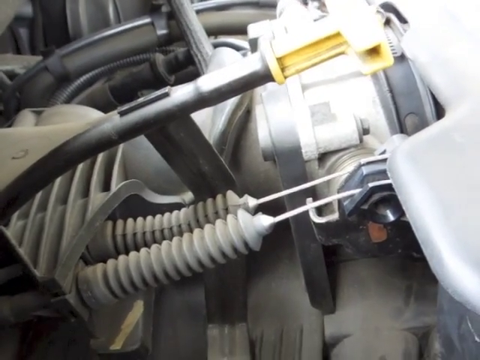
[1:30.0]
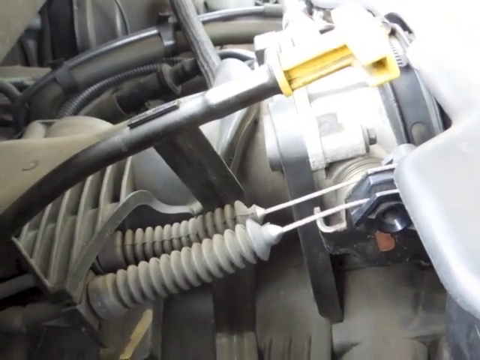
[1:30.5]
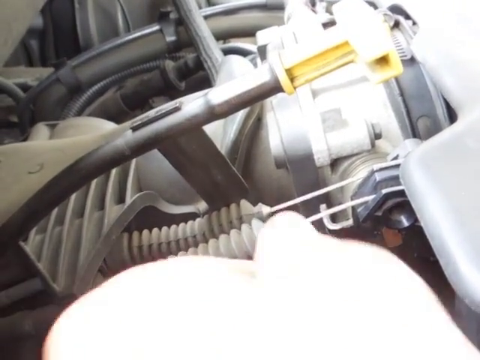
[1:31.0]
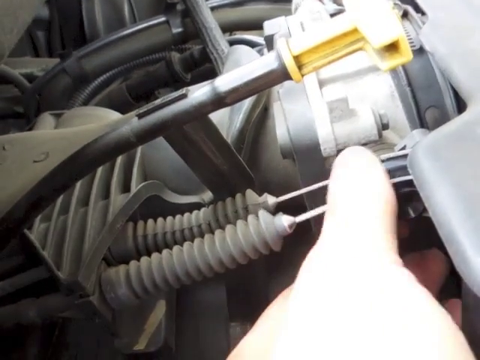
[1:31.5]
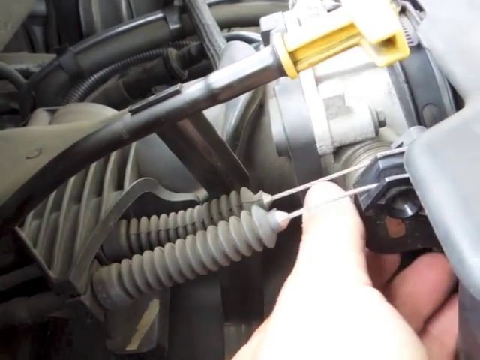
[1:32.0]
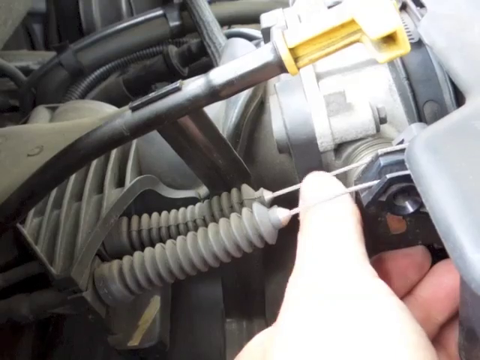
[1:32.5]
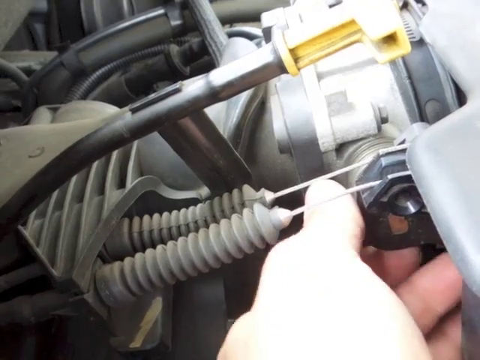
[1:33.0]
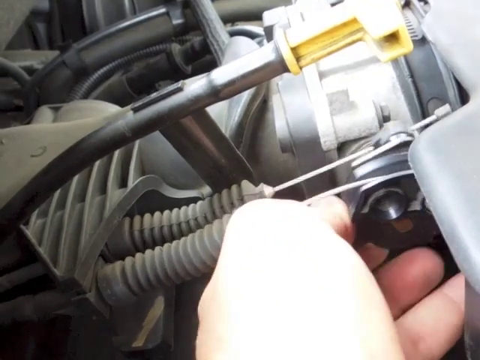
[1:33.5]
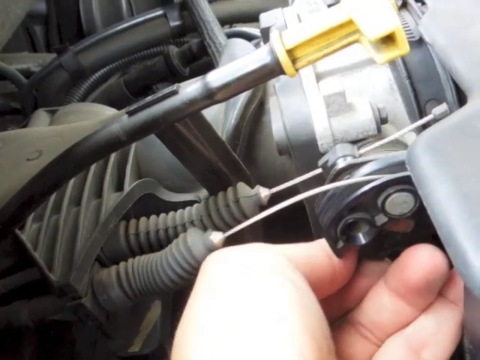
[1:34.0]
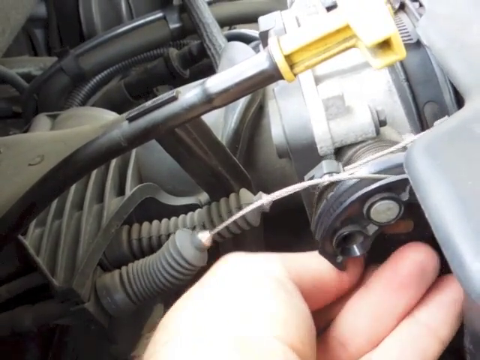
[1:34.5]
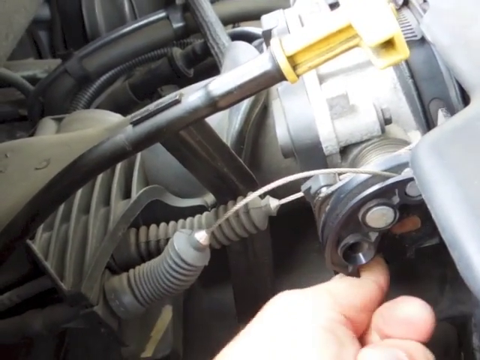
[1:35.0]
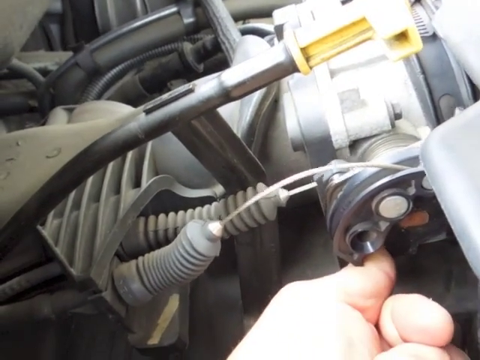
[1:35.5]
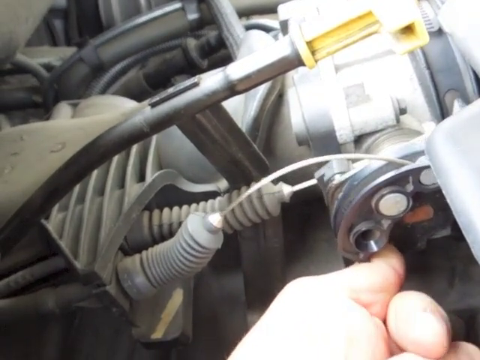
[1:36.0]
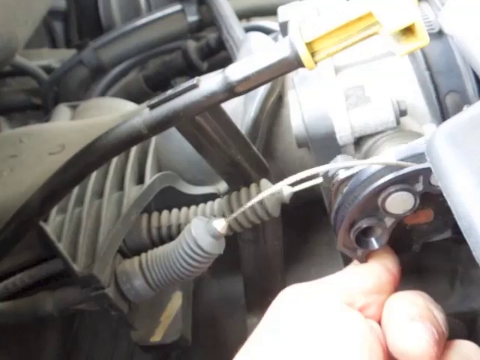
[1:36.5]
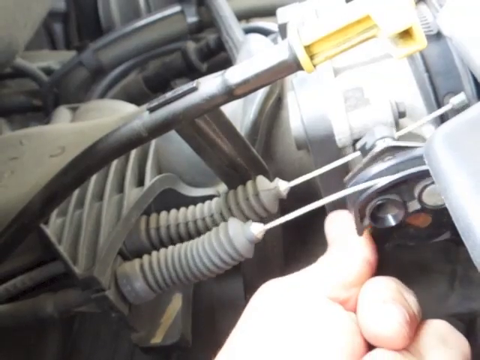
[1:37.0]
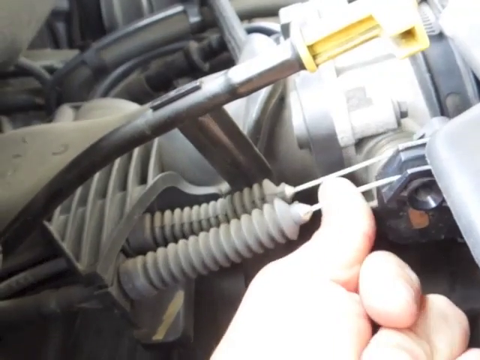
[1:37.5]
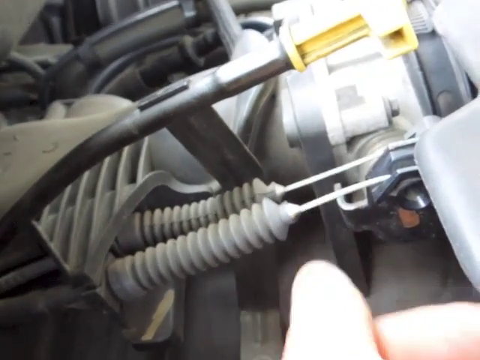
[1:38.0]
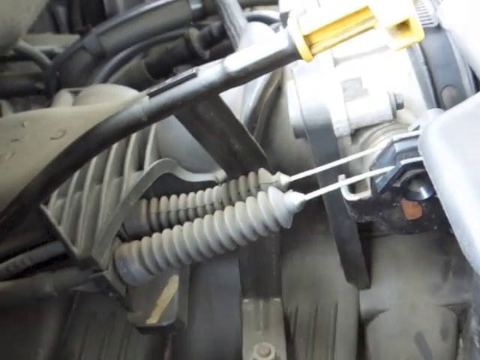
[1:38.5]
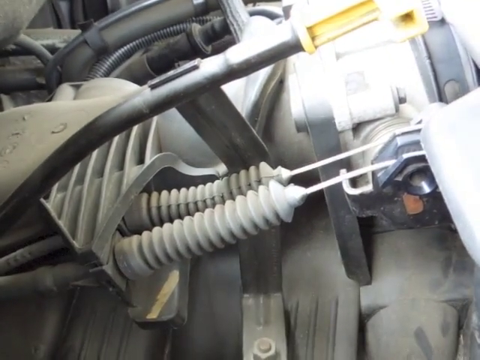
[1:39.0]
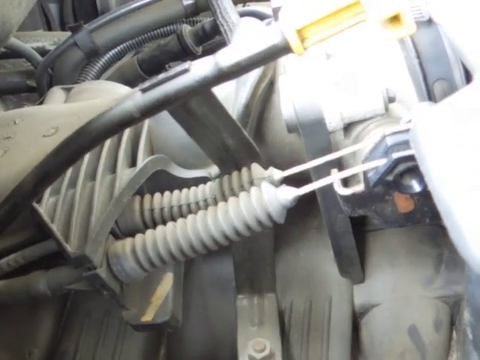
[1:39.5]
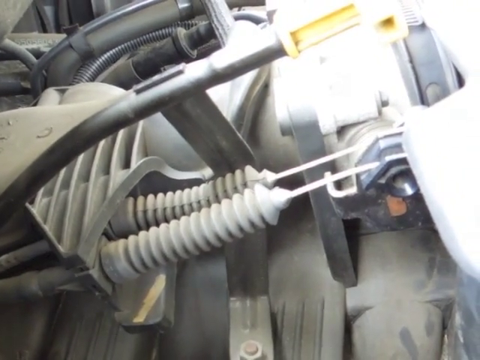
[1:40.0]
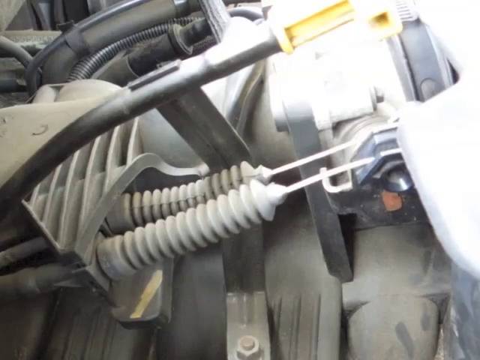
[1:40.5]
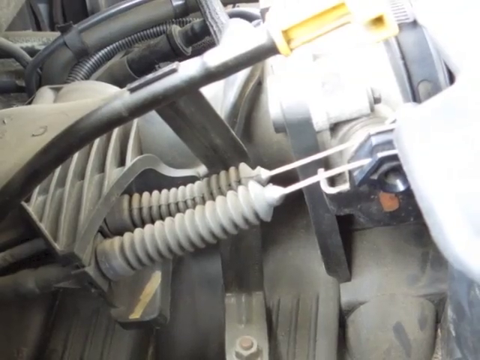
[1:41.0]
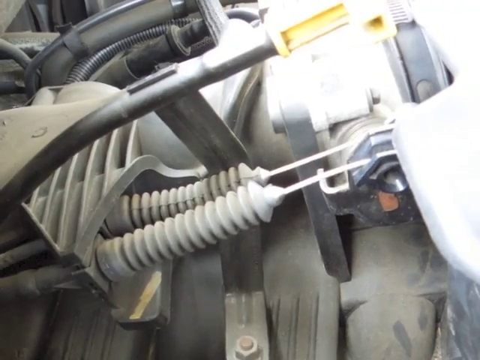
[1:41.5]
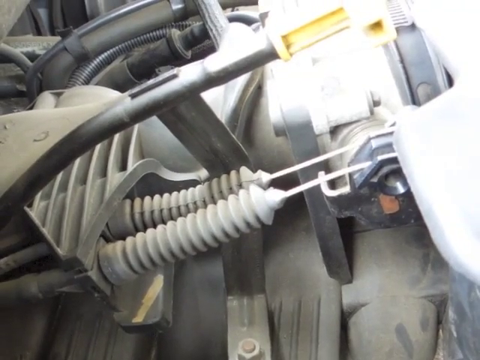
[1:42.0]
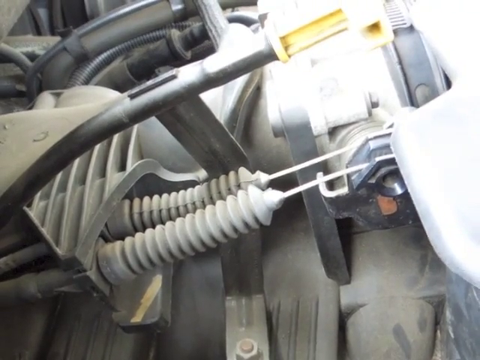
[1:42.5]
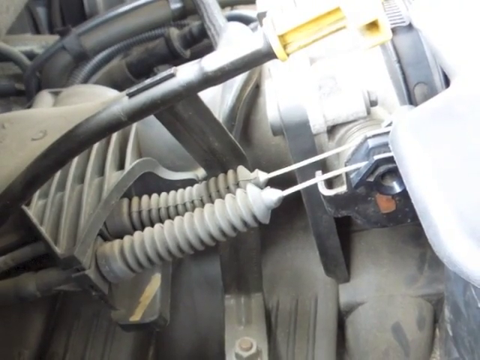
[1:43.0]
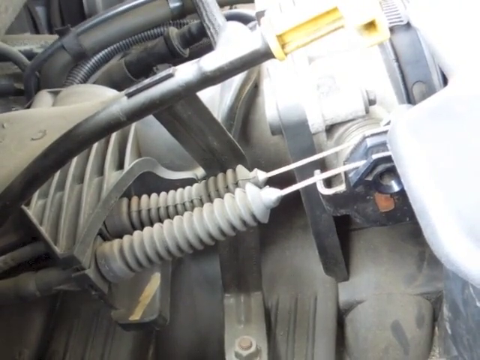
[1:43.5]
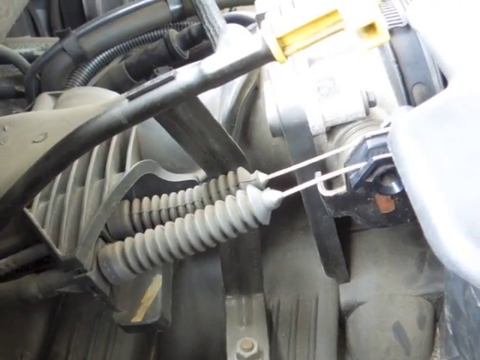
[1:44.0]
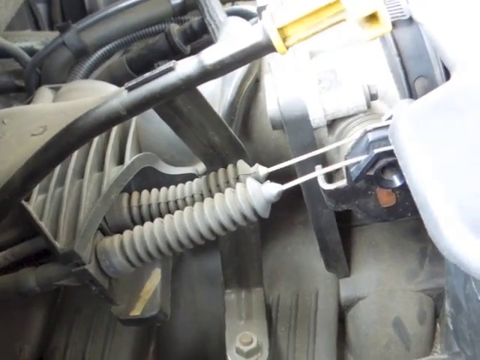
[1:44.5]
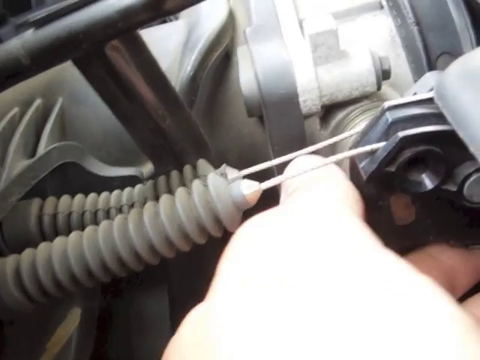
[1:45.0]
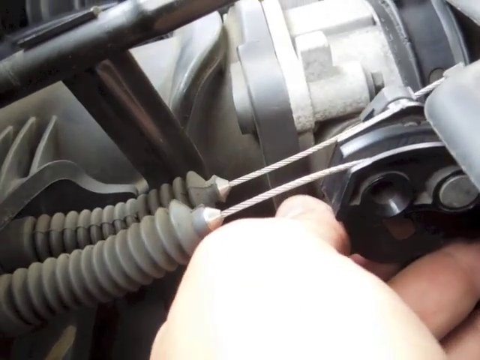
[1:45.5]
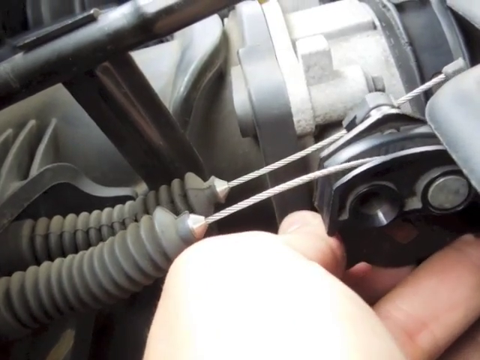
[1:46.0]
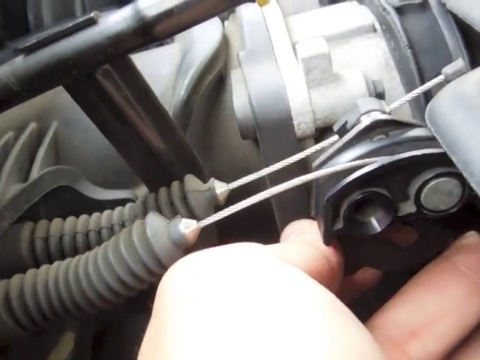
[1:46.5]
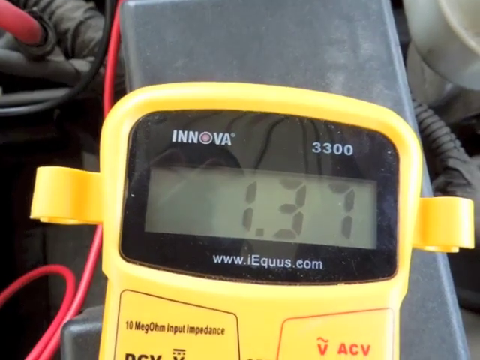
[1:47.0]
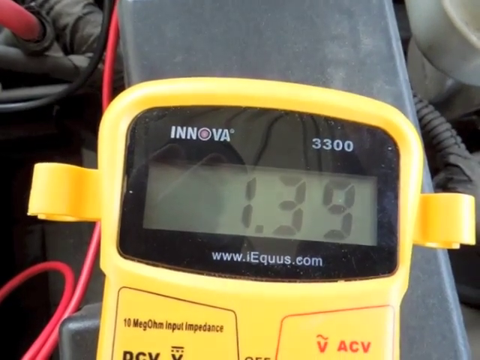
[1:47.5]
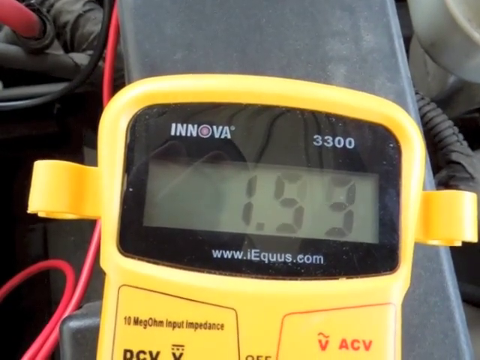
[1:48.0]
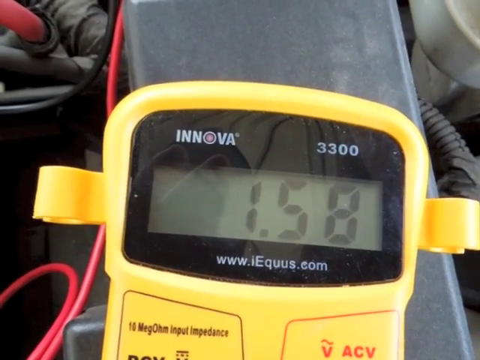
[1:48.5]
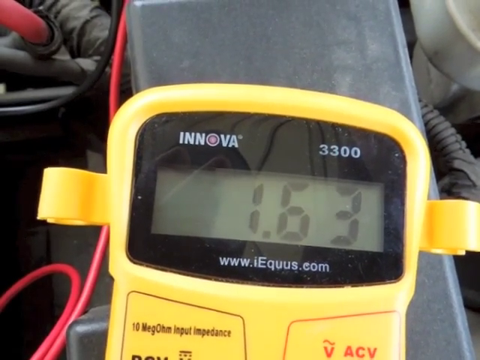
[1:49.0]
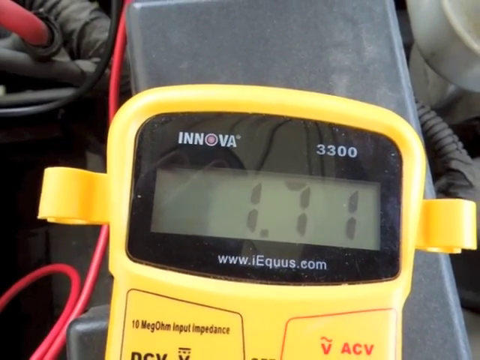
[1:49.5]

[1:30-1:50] Inside the engine compartment close to the steering column, the mechanic's left hand reaches in and works with metal control cables, flipping a device, a guide or channel that holds the cables. He turns it counterclockwise and lets it spring back clockwise. A quick cut back to the "INNOVA 3300" multimeter shows an initial reading of 1.37 that bumps up to 1.72; the change appears to be associated with the mechanic rotating this cable attachment near the steering column and firewall. The view then changes to a still image of the area near the steering column and the nearby flexible control cables, with additional hoses, cables and wiring entering the engine compartment through the firewall in the upper part of the screen.